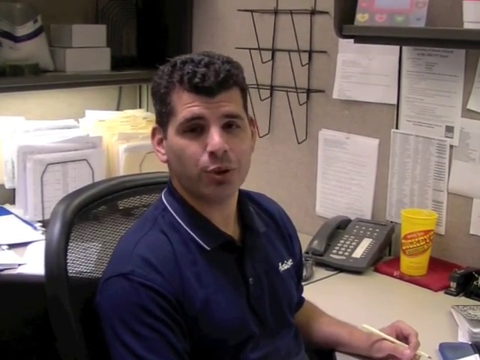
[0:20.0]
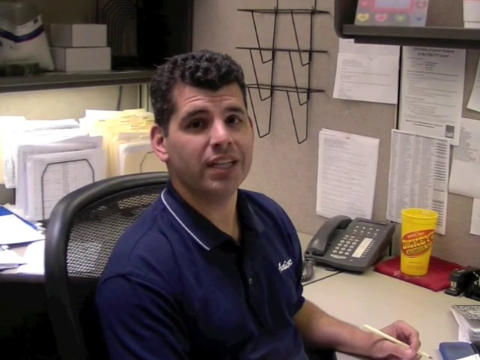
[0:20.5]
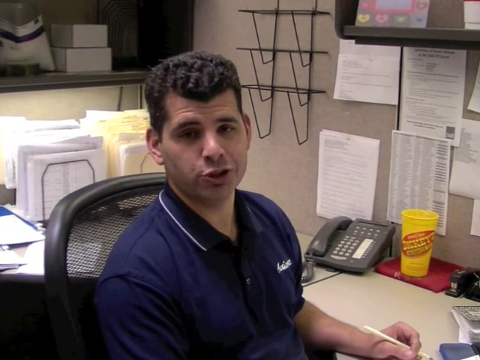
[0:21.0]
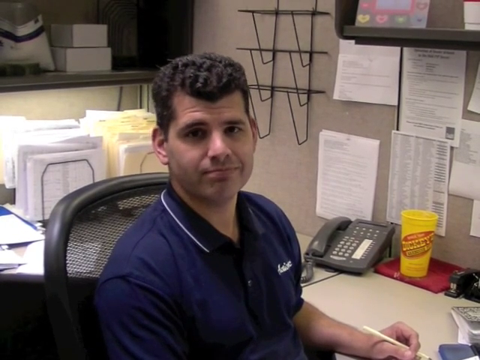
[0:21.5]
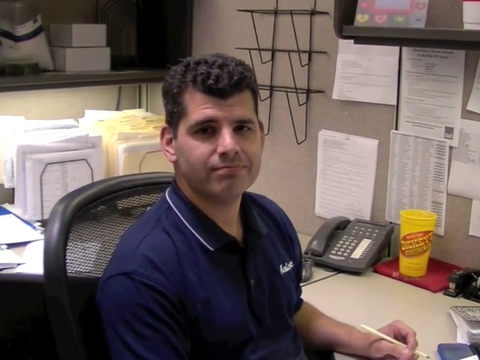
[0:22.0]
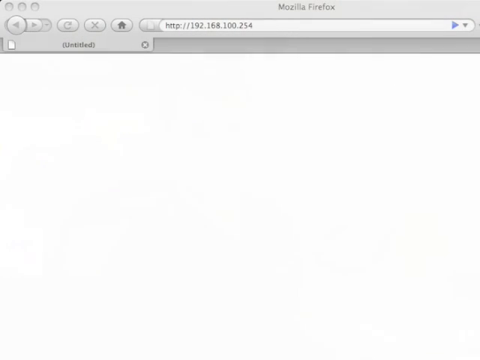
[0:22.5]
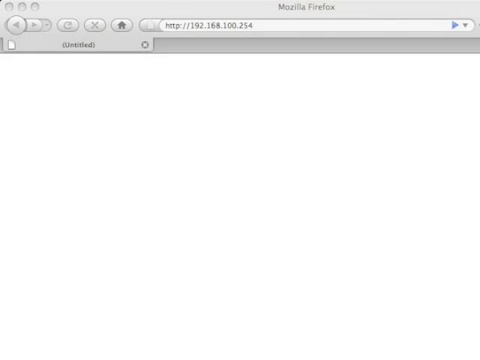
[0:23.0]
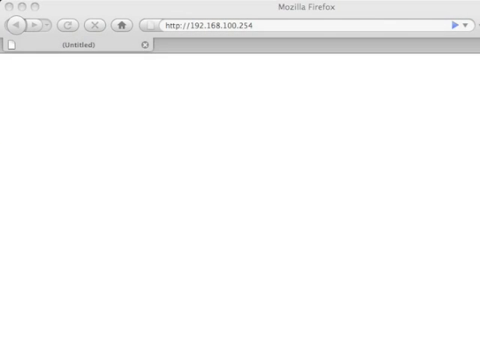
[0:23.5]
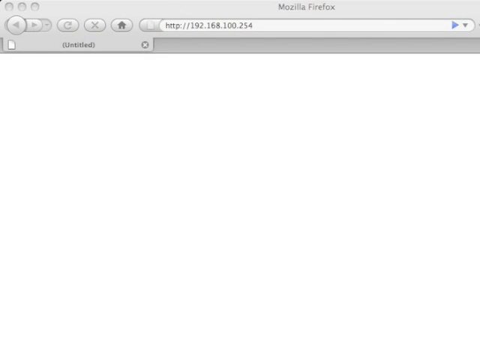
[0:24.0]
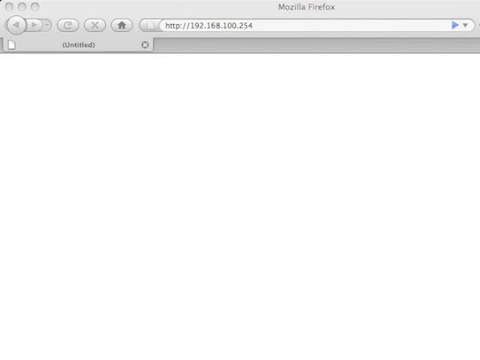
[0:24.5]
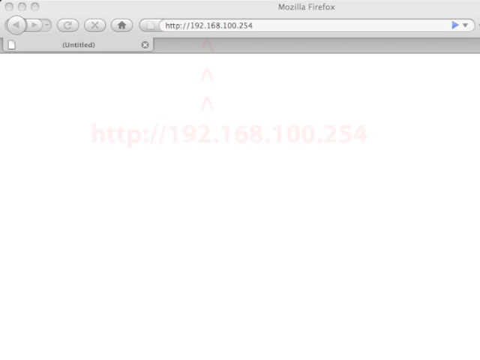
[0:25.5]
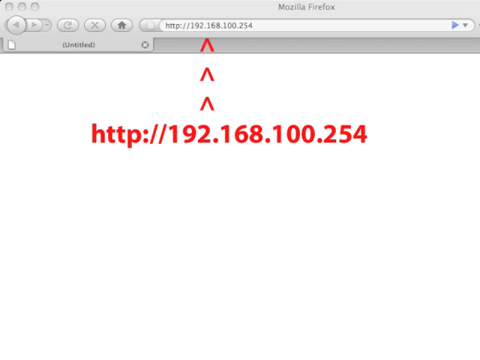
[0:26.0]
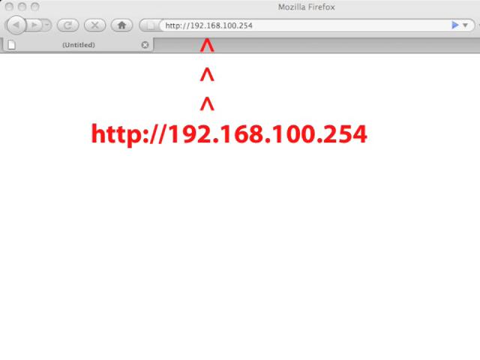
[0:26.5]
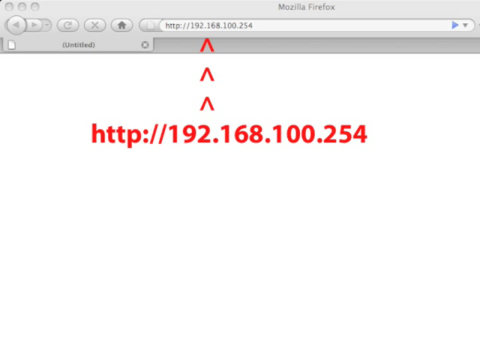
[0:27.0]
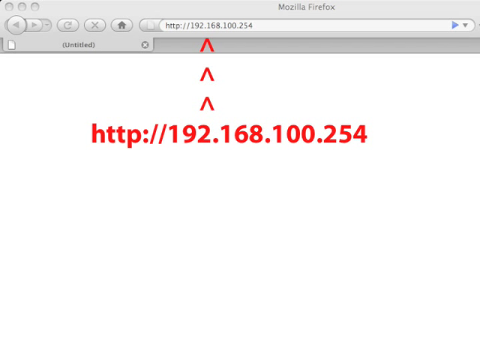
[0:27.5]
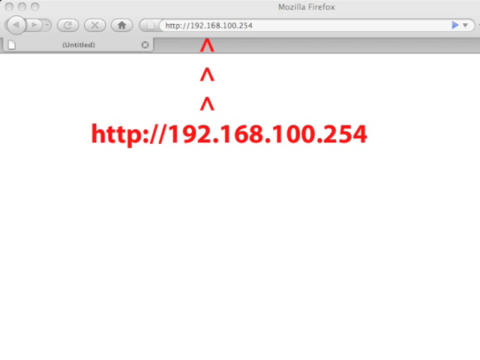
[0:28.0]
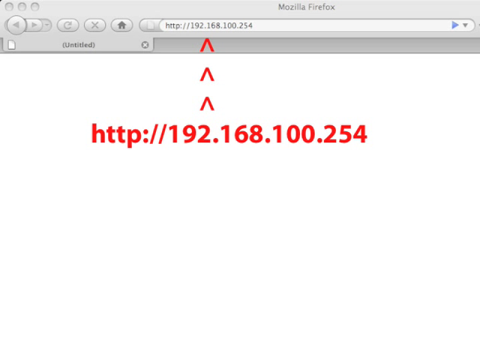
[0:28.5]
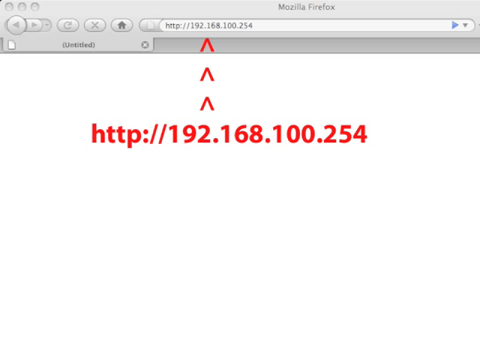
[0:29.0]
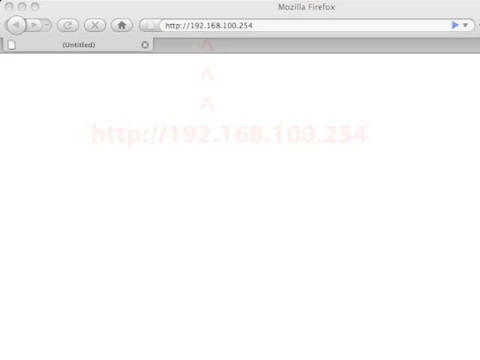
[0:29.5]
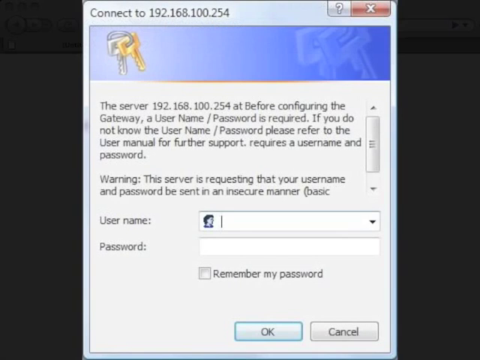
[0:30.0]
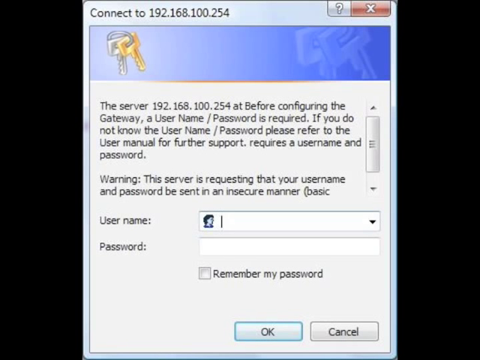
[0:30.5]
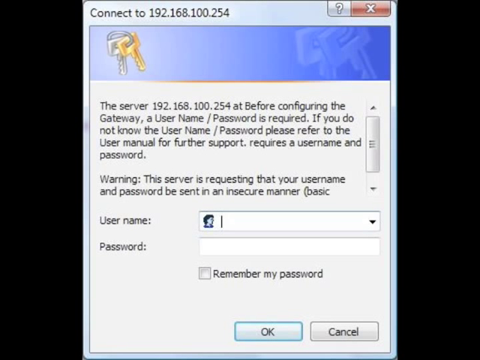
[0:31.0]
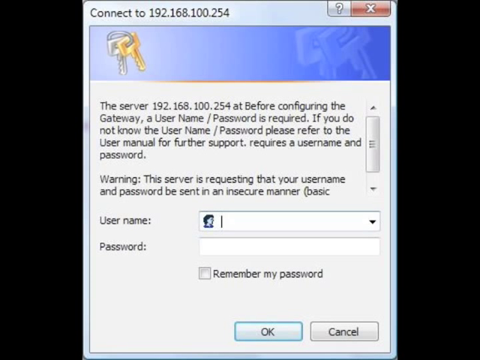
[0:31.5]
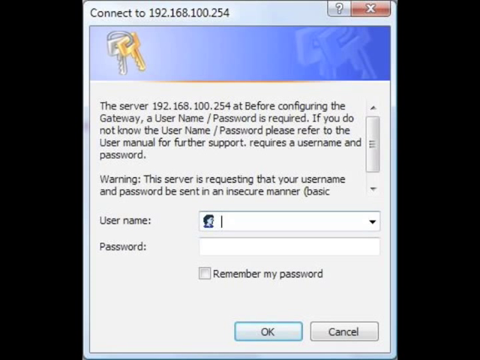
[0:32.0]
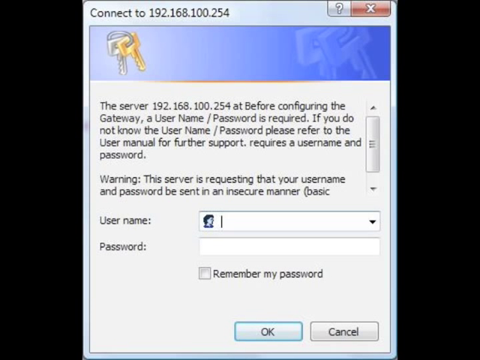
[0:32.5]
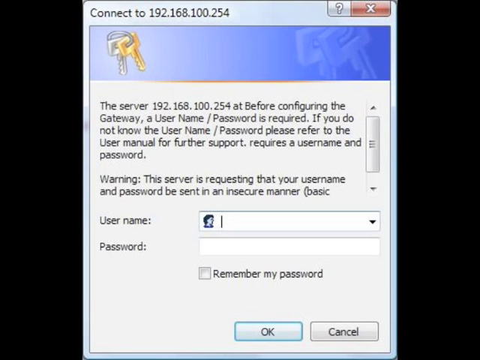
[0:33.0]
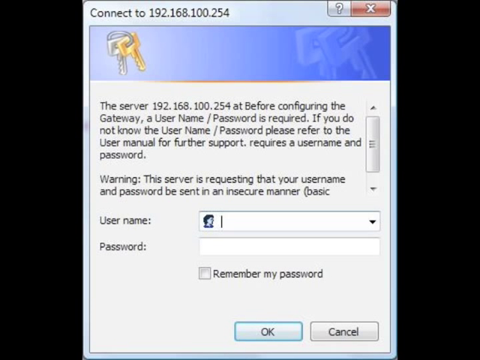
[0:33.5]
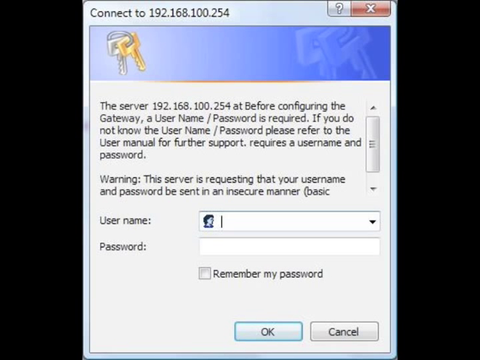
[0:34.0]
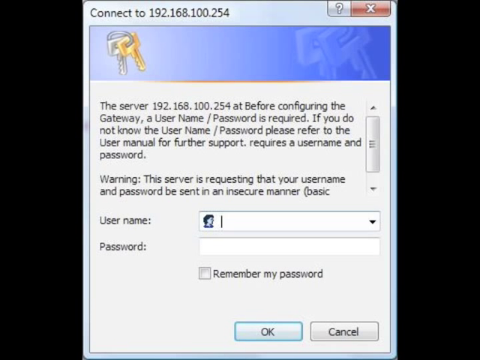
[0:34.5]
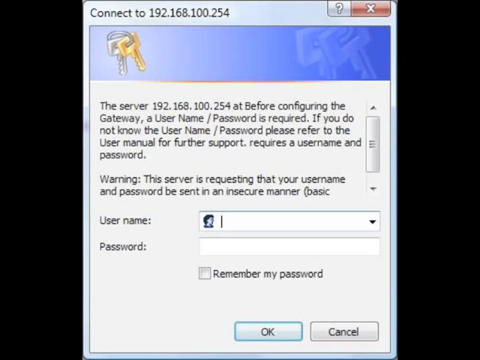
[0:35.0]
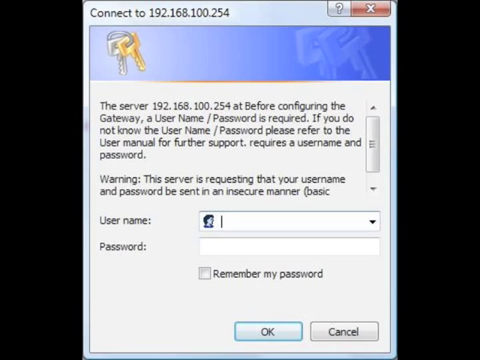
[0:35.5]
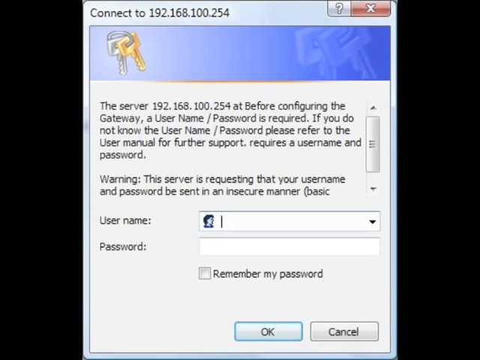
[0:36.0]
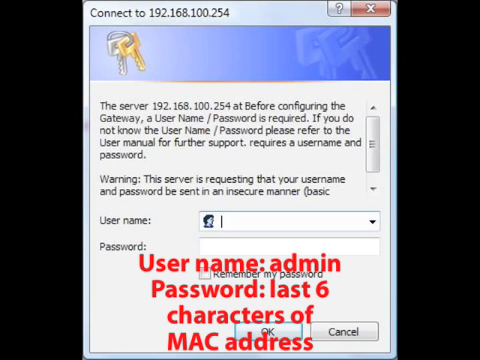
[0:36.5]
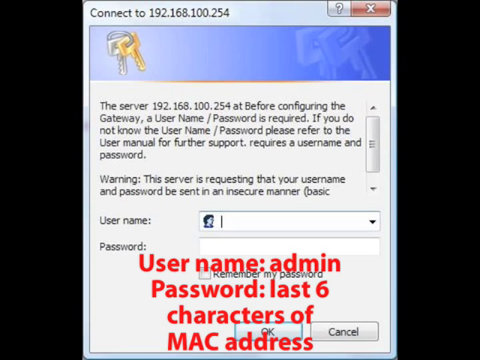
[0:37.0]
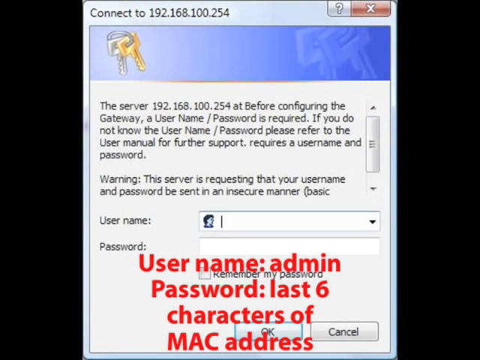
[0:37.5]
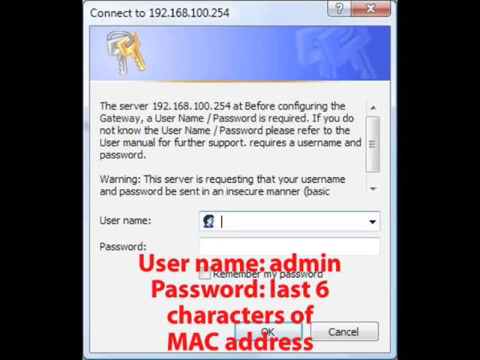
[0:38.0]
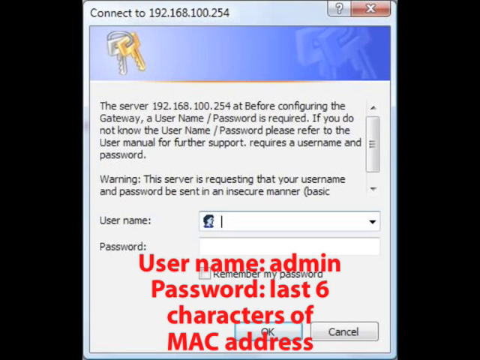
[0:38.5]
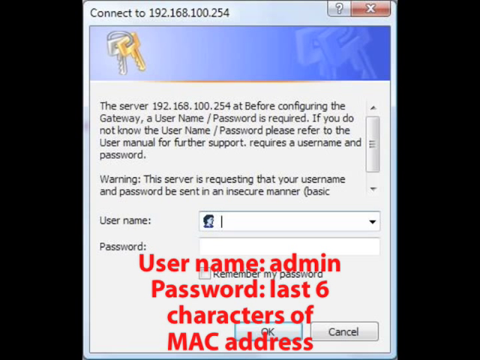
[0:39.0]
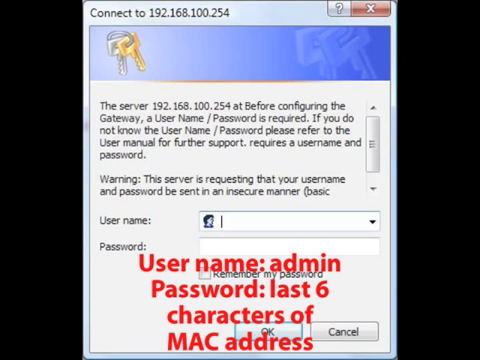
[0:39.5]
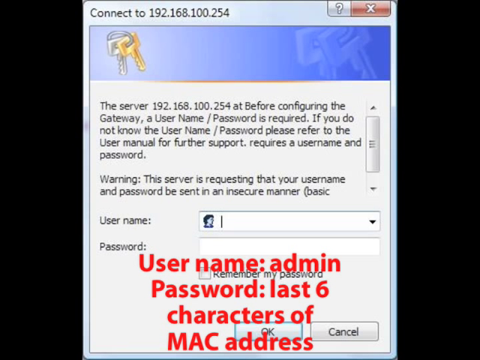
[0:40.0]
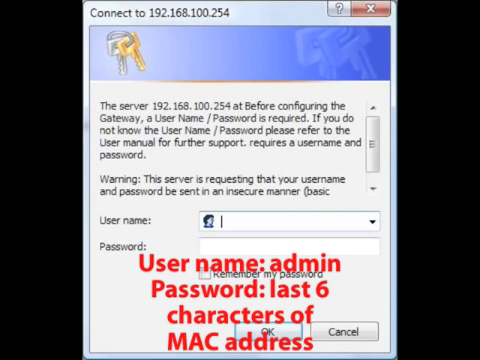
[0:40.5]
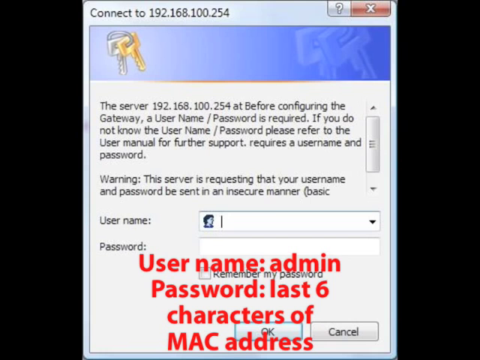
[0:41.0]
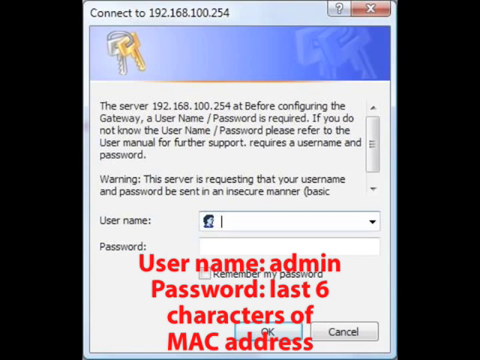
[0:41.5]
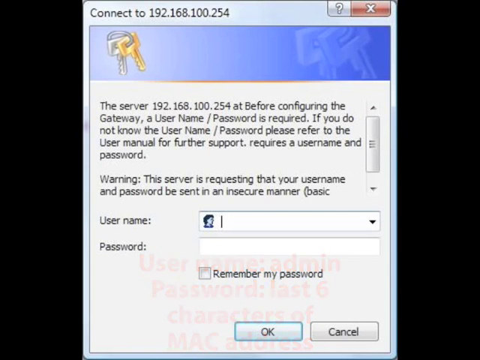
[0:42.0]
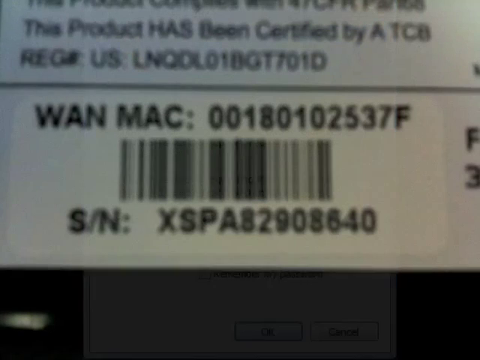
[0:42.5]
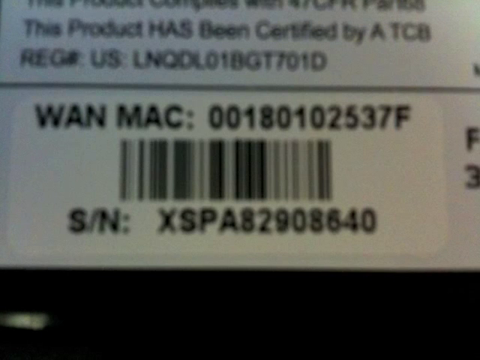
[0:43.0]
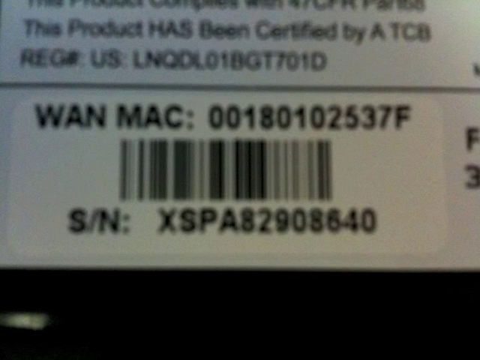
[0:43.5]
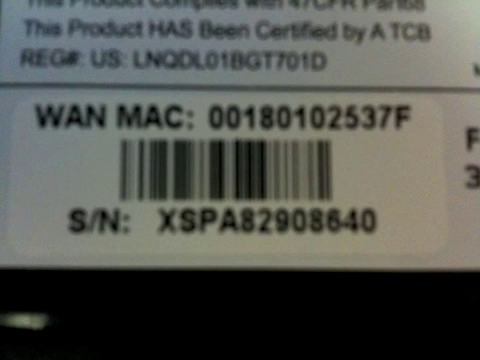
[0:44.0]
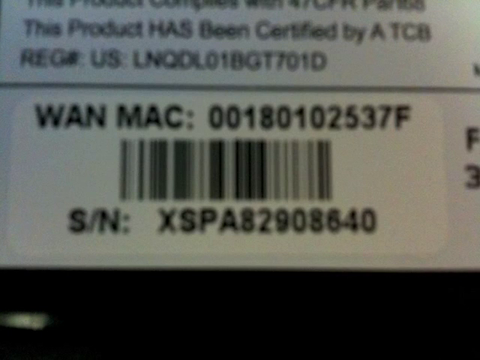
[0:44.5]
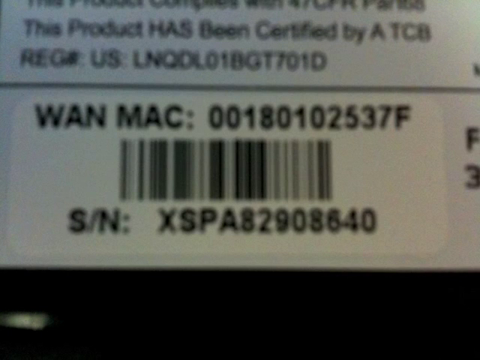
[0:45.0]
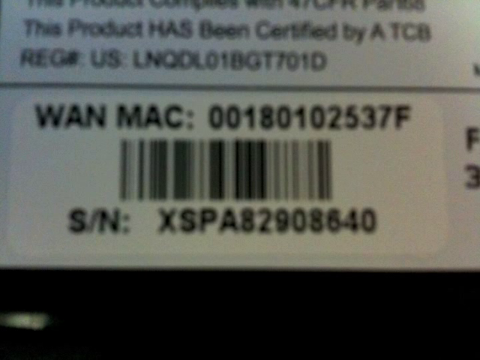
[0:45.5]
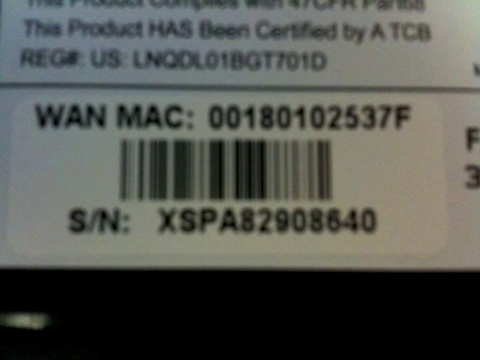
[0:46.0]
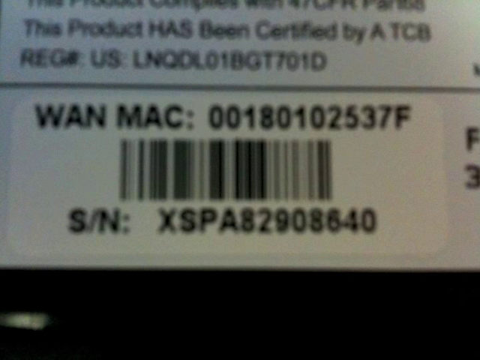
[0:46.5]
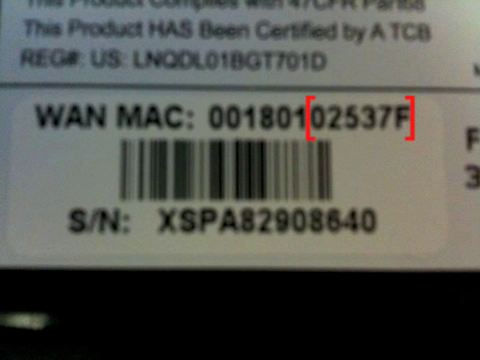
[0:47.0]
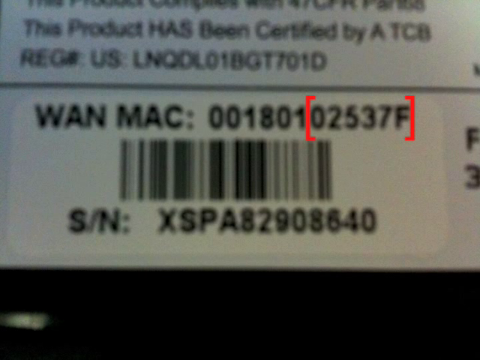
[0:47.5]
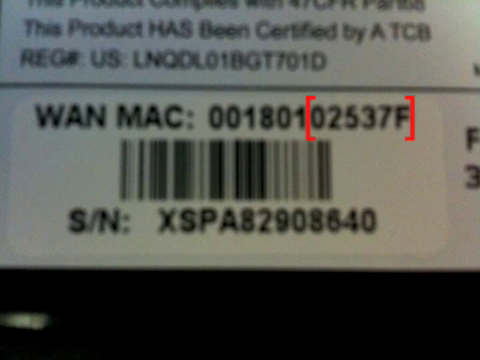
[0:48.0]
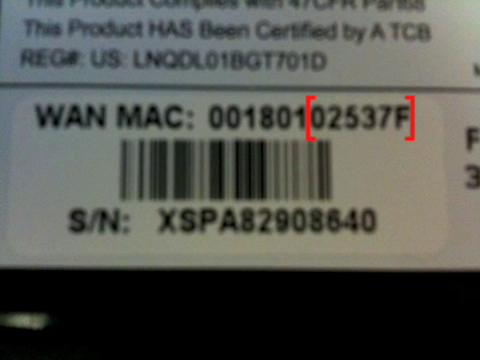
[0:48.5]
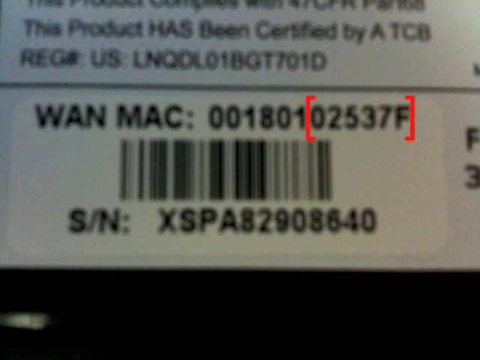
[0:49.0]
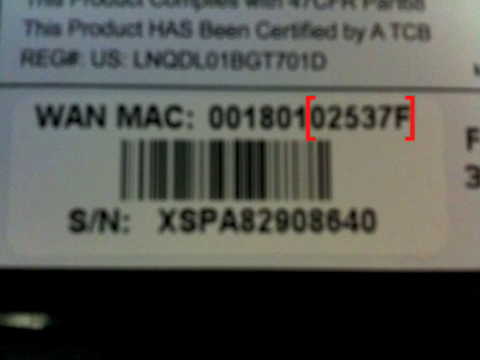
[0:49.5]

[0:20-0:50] The individual is sitting in an office setting, talking a bit. To his left is a phone with buttons for different extensions on the right-hand side of the phone. Next to it is a yellow cup that looks like a plastic cup, with text that says something like "Dickies." A Mozilla web page appears, which looks like an older version and is initially blank. The focus seems to be on the server: the screen says "connect to 192.168.100.254" and shows keys underneath. Text refers to "the server 192.168.100.254," begins "Before configuring the gateway," and states that a username and password are required, adding "If you do not know the username and password, please refer to the user manual for further support." There is a warning below and fields for a username and password, and the username and password are shown in red on the screen. Then the back of a device is shown, with a Mac and a serial number.